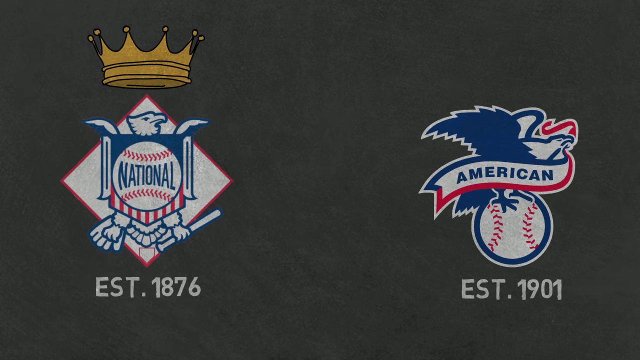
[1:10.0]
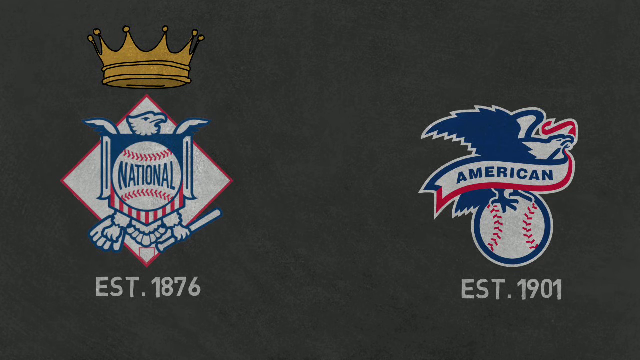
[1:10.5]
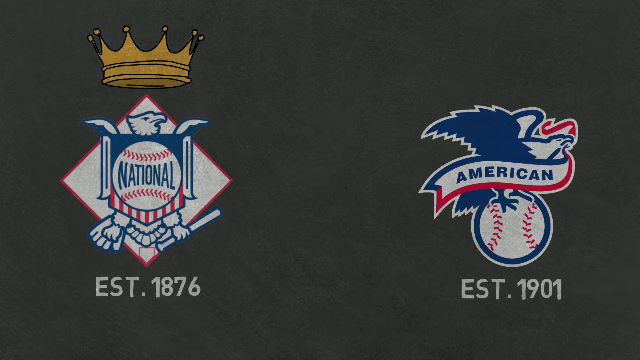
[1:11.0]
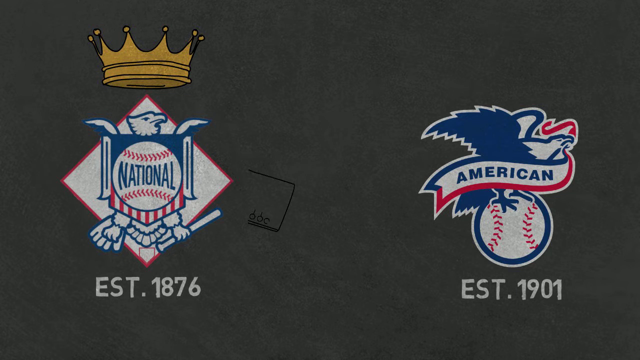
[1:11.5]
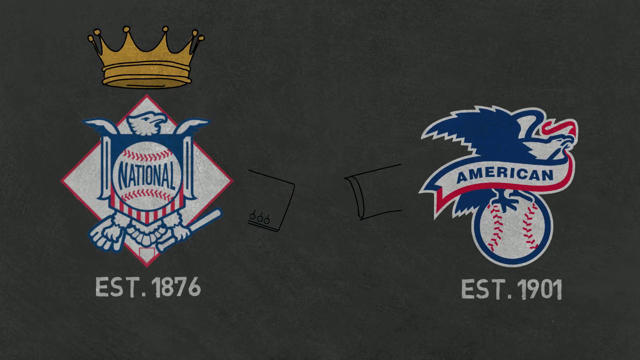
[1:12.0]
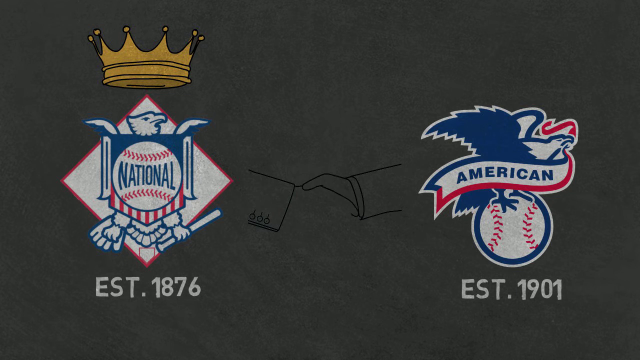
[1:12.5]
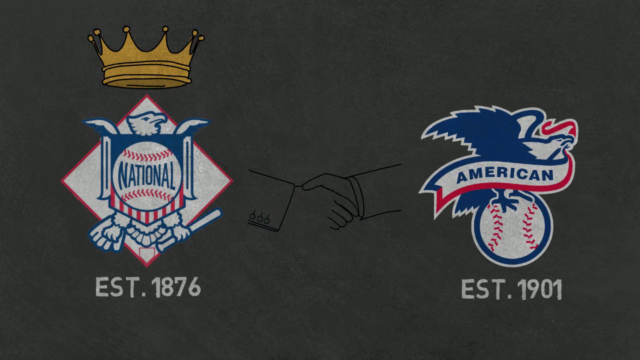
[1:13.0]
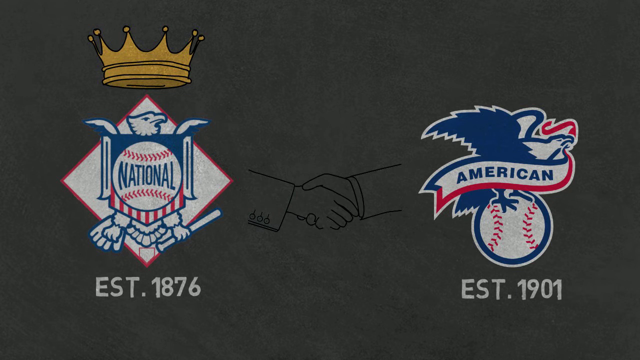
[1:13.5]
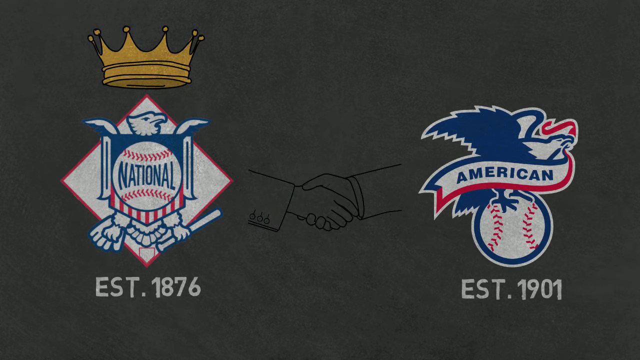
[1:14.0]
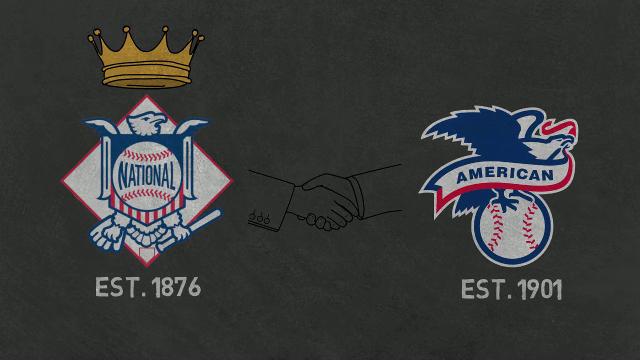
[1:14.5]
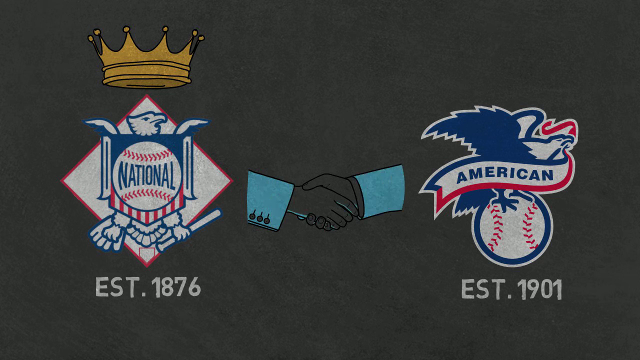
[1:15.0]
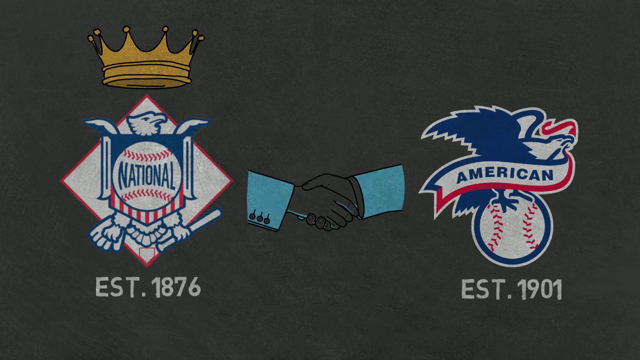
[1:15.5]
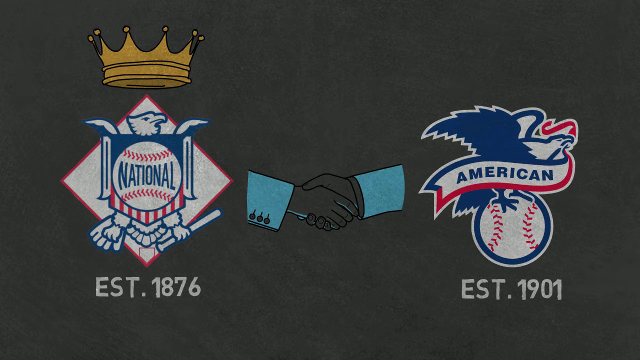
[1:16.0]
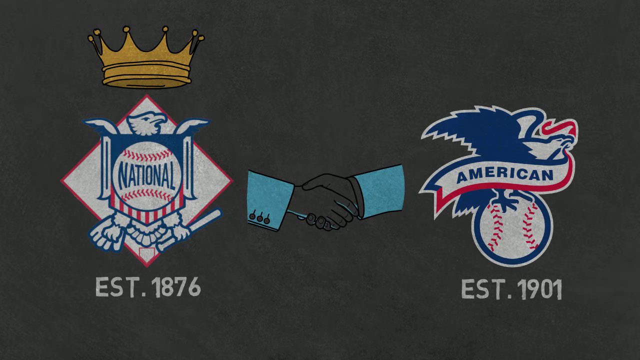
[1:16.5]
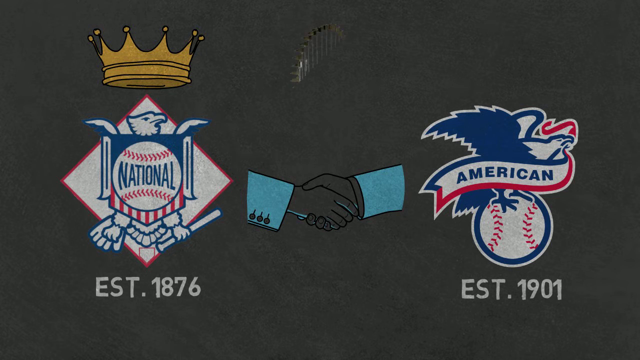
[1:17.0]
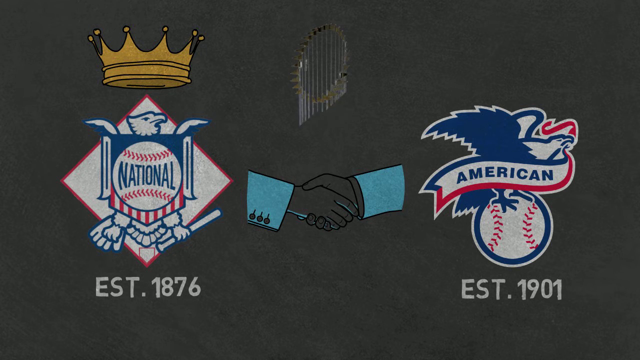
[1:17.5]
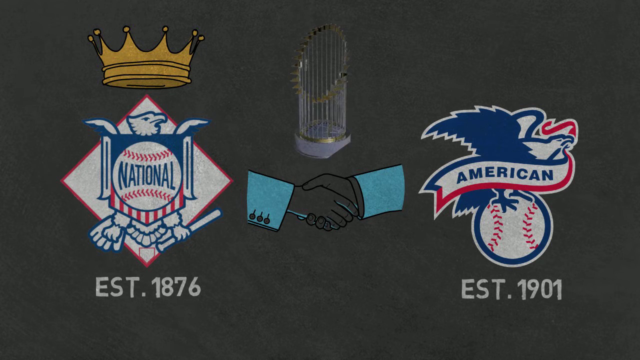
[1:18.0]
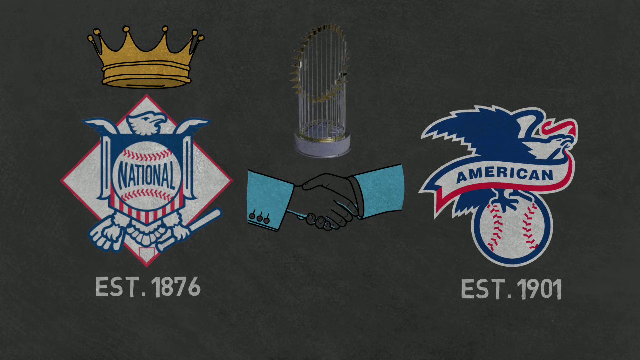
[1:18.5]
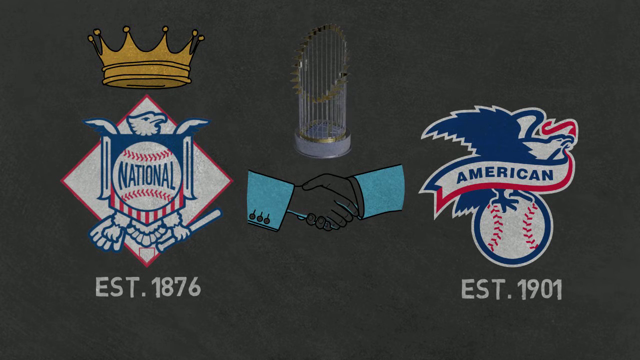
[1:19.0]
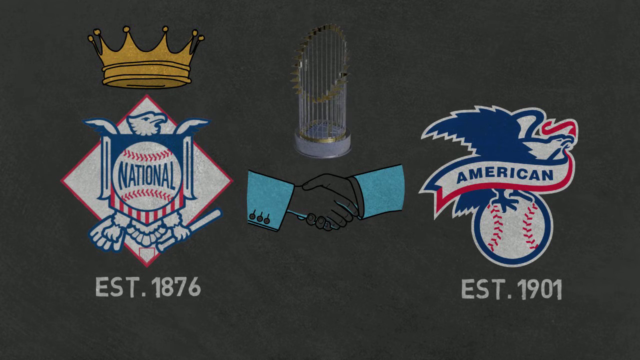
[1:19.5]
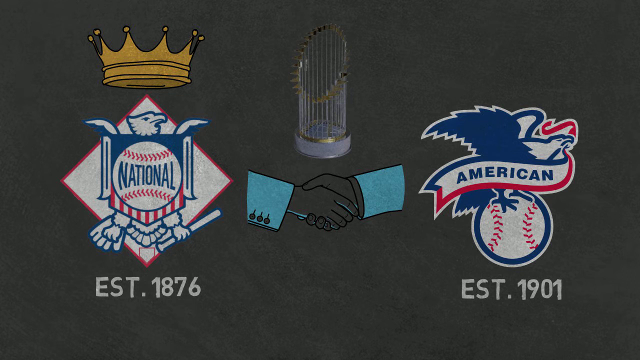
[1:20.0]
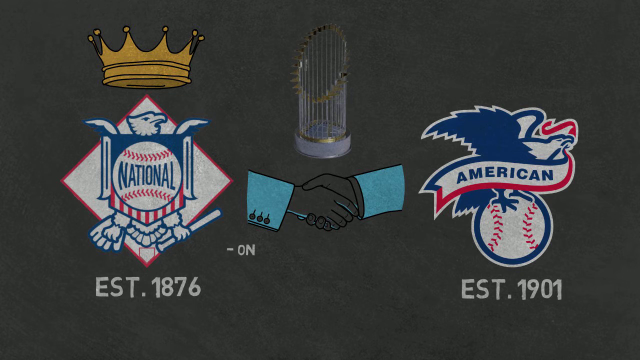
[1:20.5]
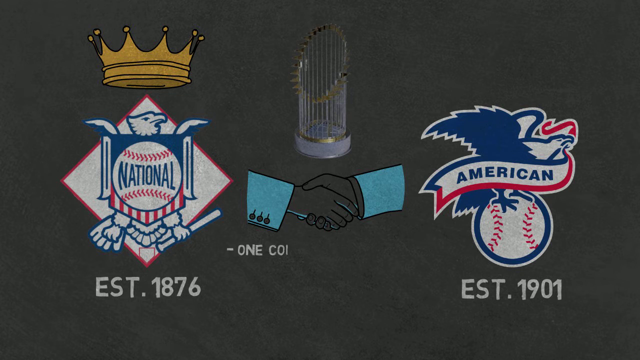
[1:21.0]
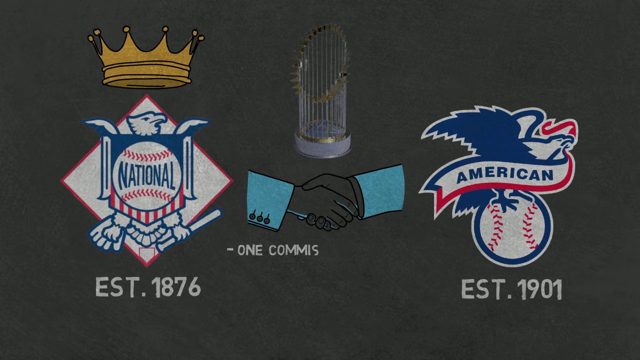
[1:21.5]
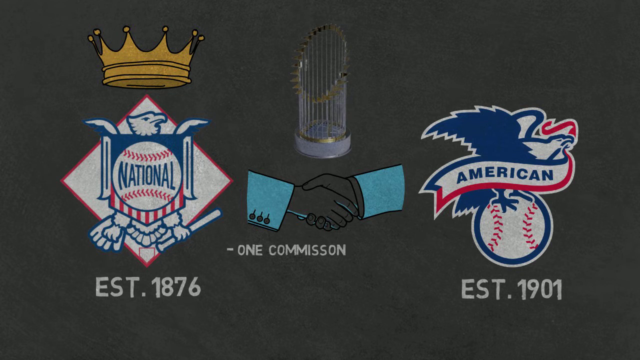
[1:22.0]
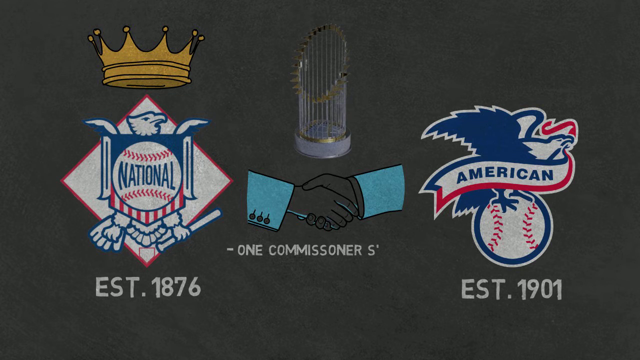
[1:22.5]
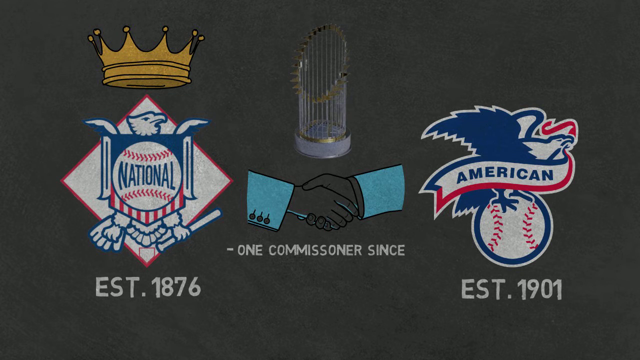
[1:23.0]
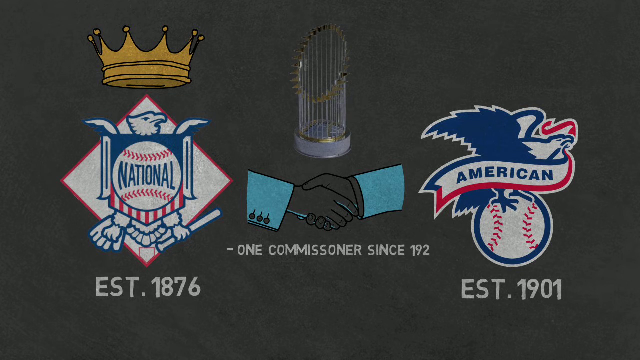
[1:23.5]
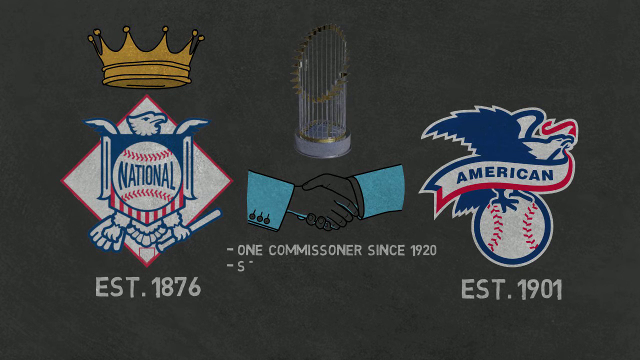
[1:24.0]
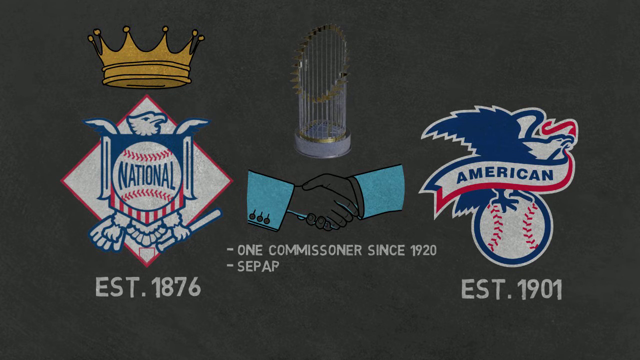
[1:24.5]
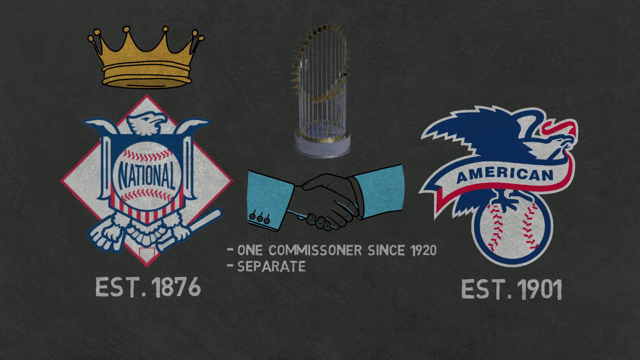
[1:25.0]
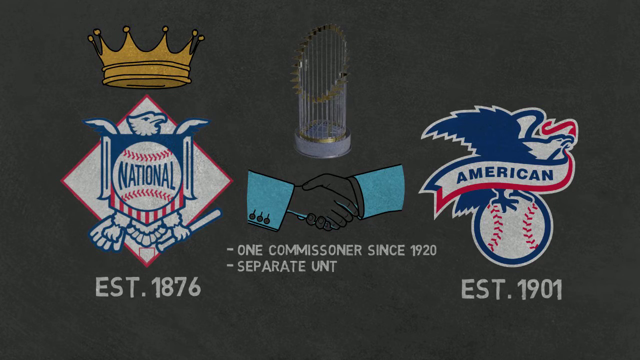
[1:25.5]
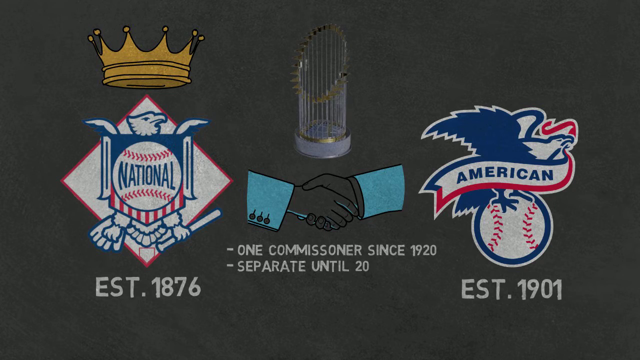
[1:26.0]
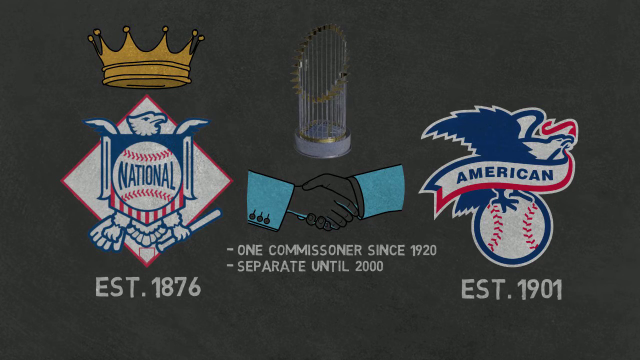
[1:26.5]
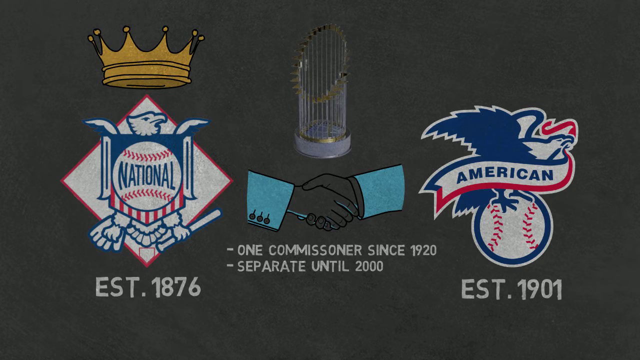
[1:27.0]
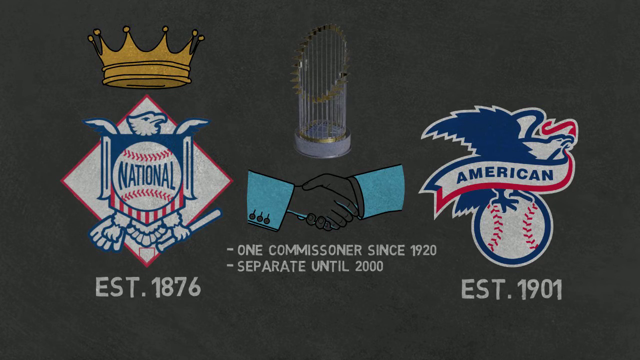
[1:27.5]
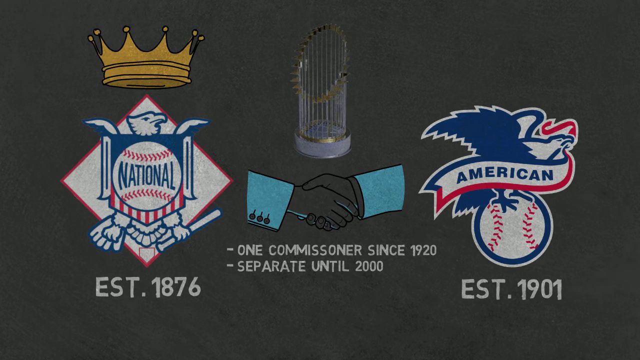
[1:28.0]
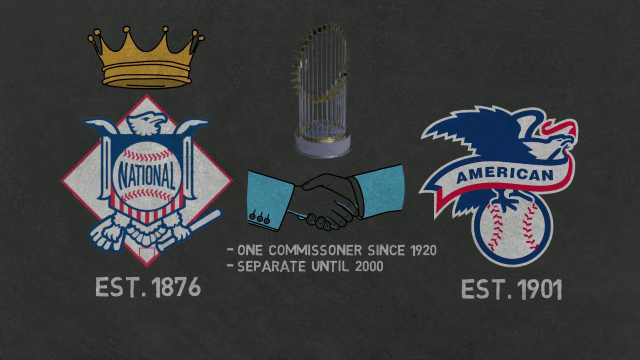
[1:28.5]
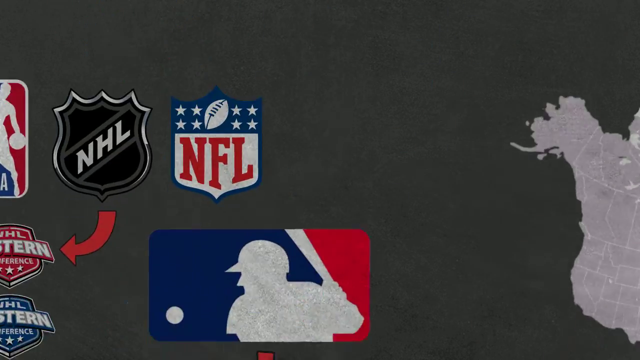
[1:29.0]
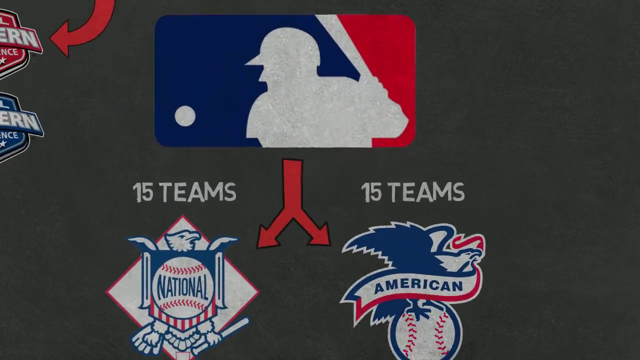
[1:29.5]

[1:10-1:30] A handshake is drawn between the two logos. The outlines of the hands are drawn first, then the suit sleeves, which are colored blue; the hands are not colored except for a little outlining to highlight the lighting. In the center, a unique trophy-like object is drawn from top to bottom, with a round base and rods coming out of it. Below, text is written in bullet points: "one commissioner since 1920" and, in another bullet point, "separate until 2000". The view then pans back to the main page showing the MLB branching and the other professional sports logos.